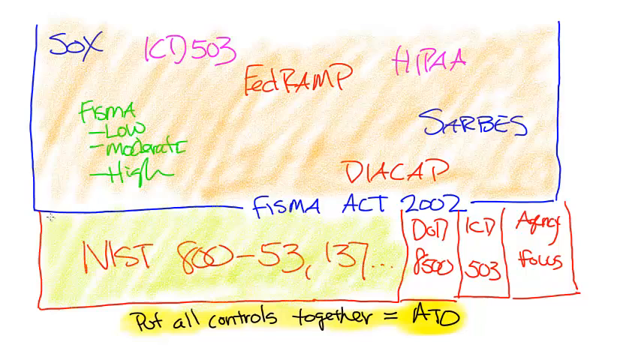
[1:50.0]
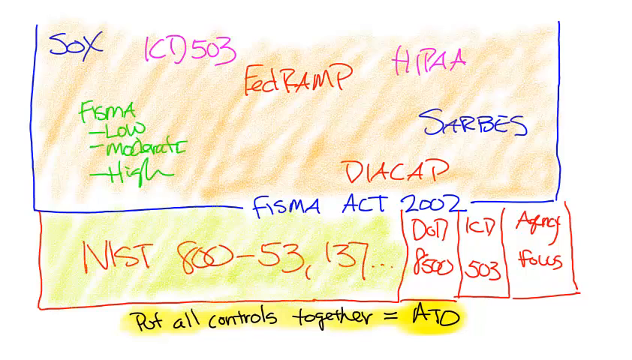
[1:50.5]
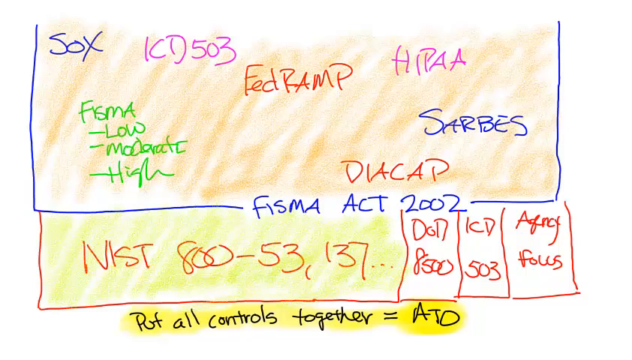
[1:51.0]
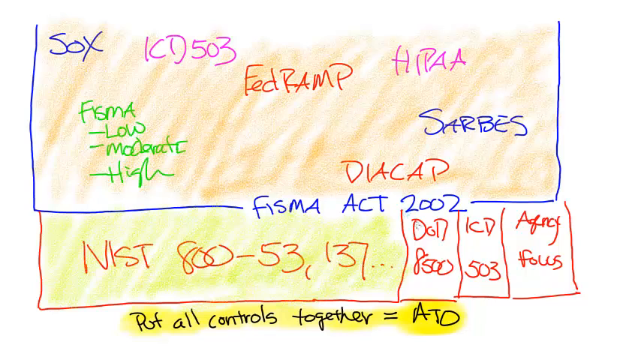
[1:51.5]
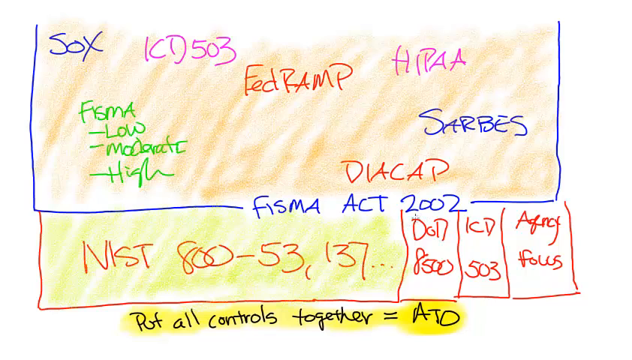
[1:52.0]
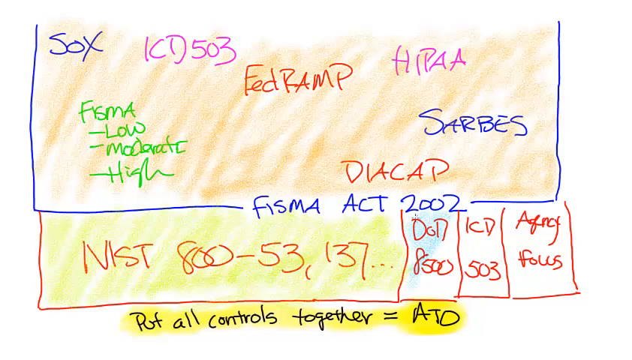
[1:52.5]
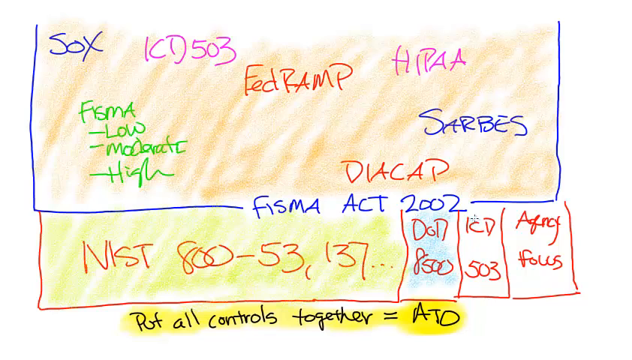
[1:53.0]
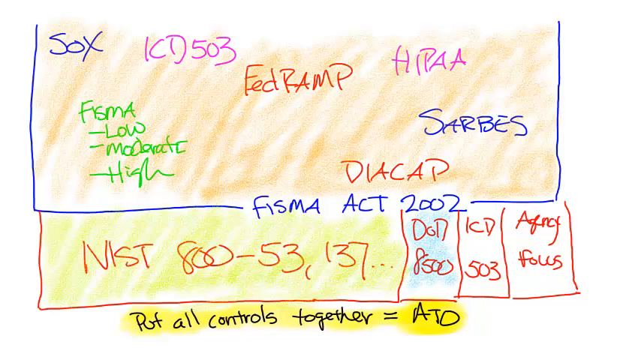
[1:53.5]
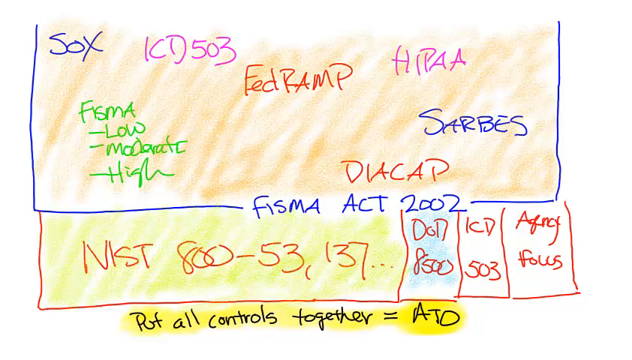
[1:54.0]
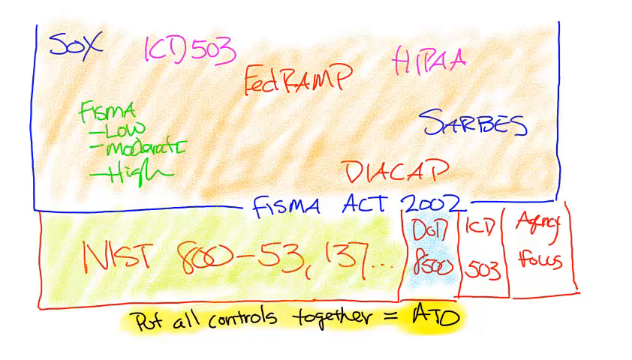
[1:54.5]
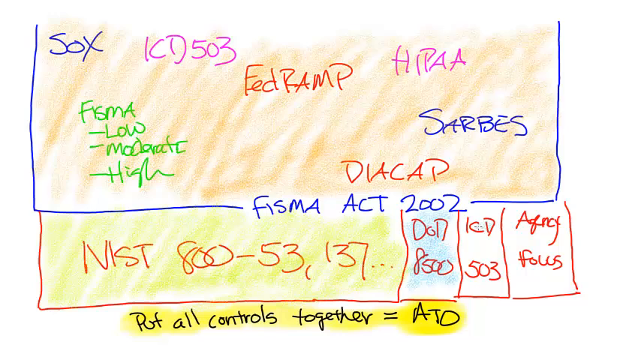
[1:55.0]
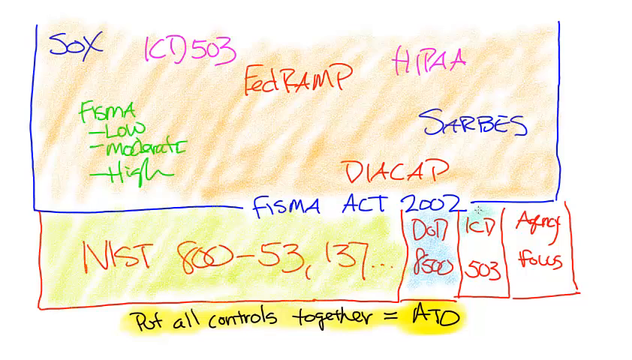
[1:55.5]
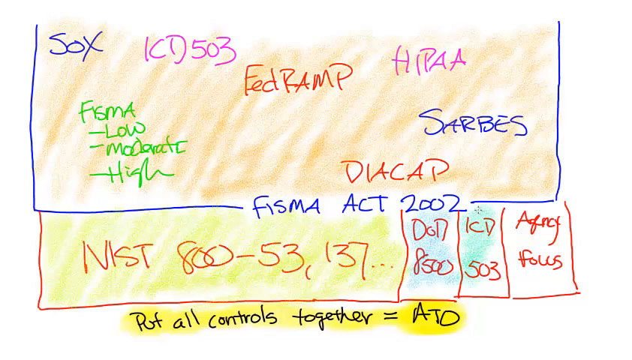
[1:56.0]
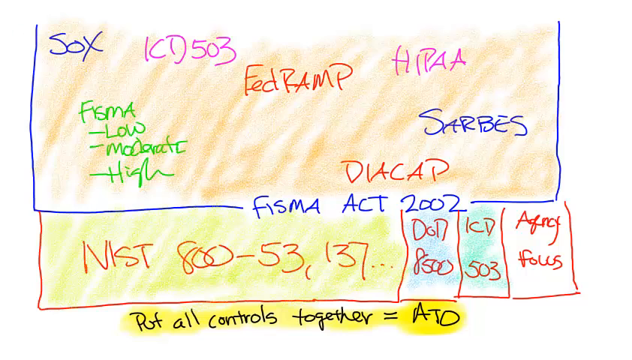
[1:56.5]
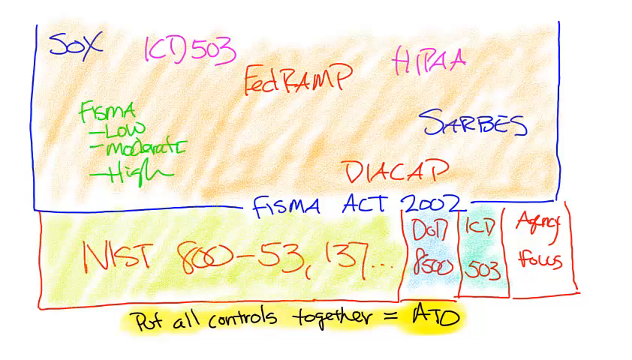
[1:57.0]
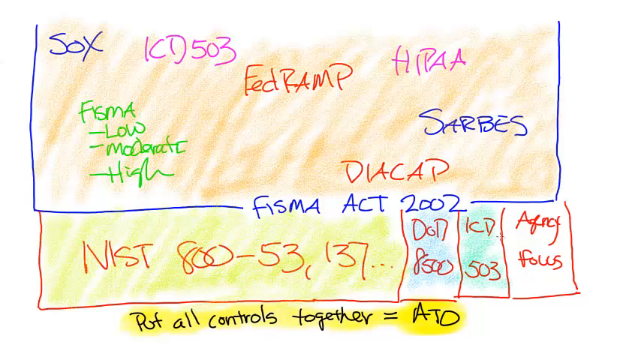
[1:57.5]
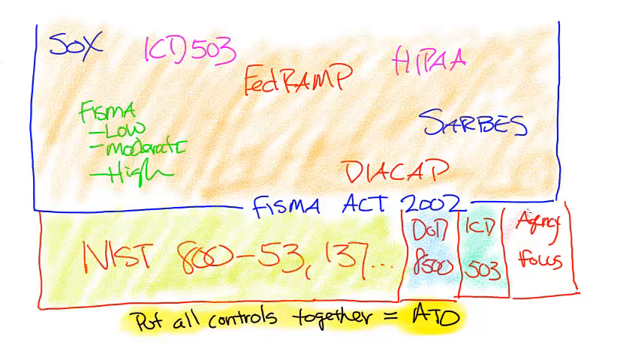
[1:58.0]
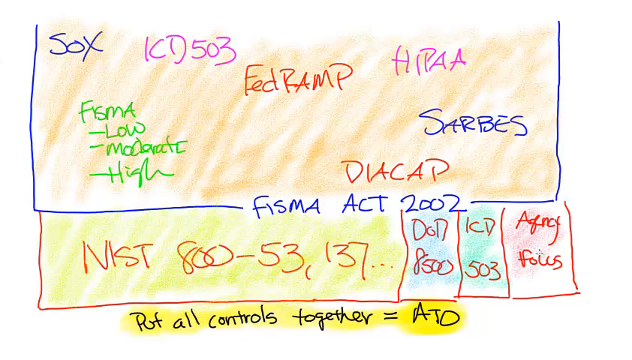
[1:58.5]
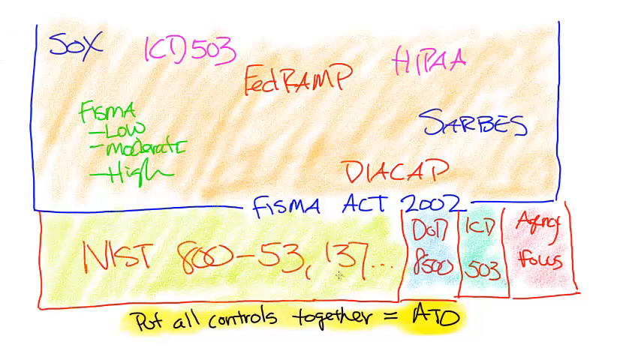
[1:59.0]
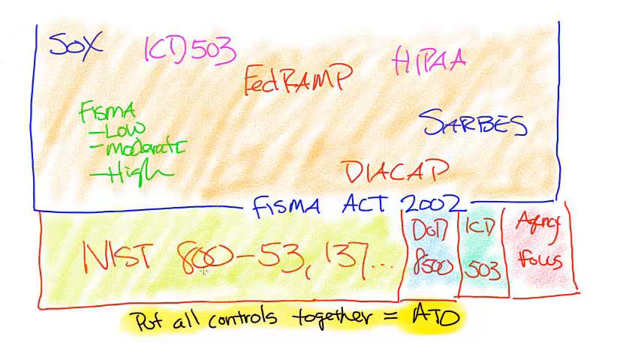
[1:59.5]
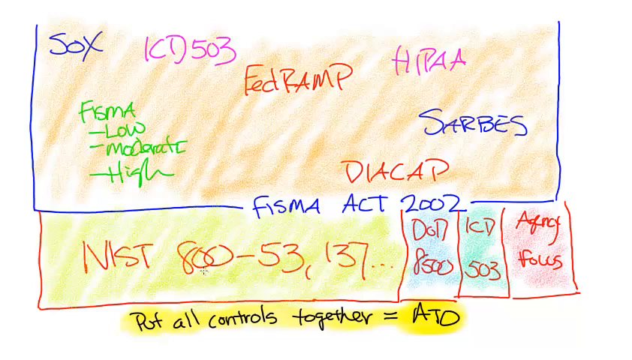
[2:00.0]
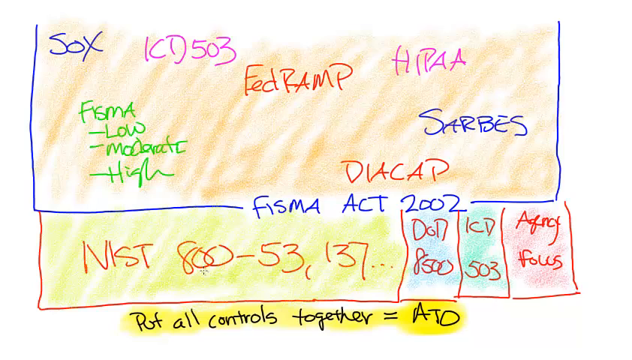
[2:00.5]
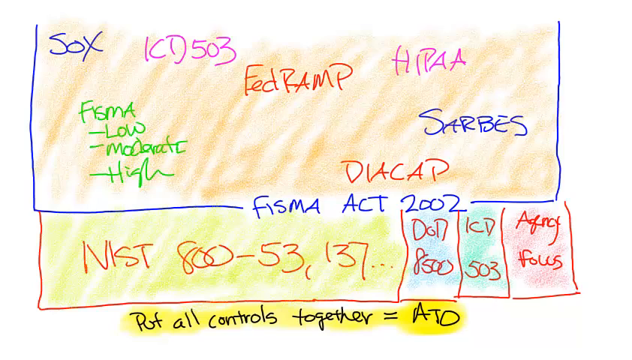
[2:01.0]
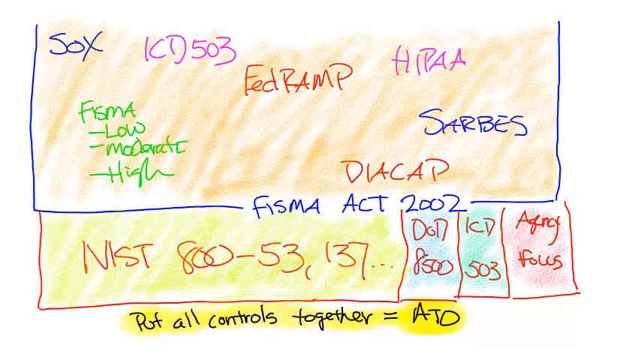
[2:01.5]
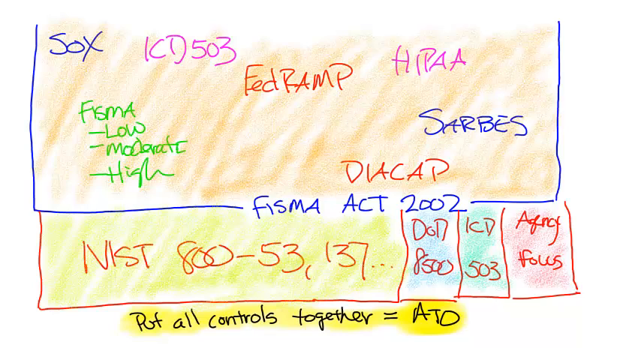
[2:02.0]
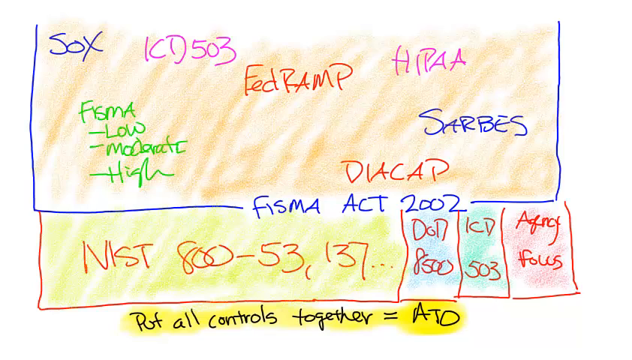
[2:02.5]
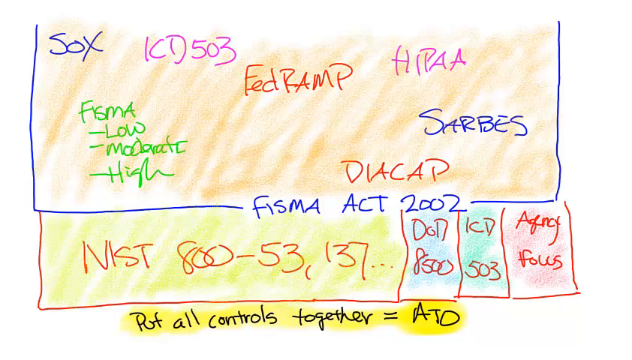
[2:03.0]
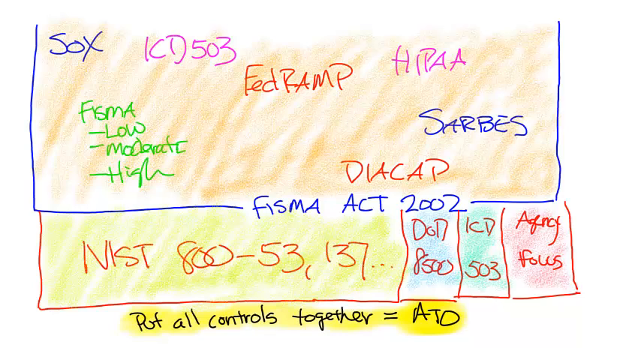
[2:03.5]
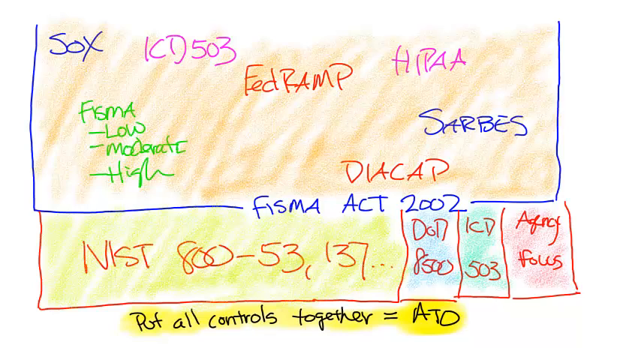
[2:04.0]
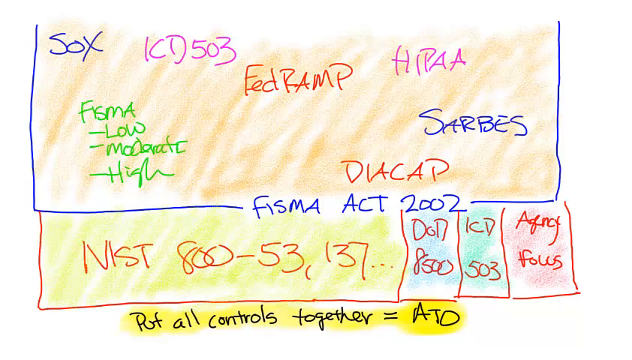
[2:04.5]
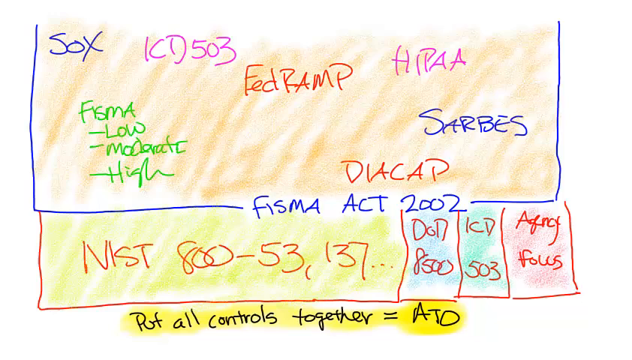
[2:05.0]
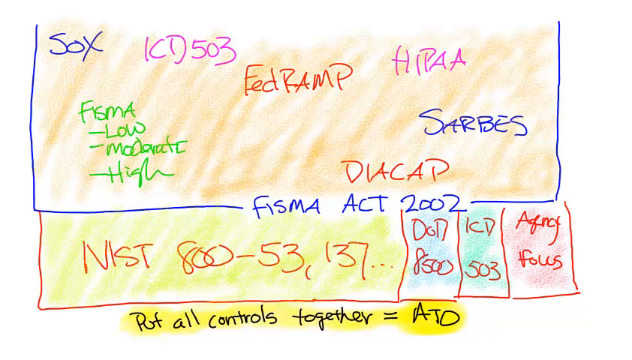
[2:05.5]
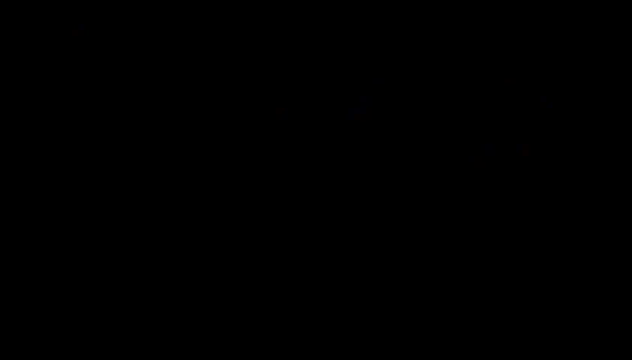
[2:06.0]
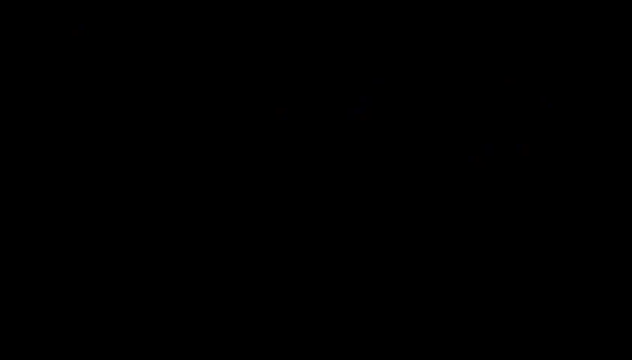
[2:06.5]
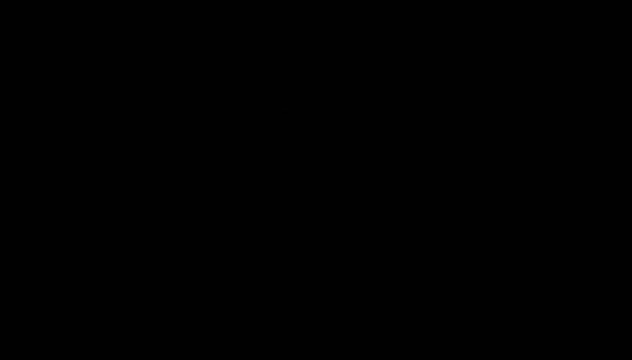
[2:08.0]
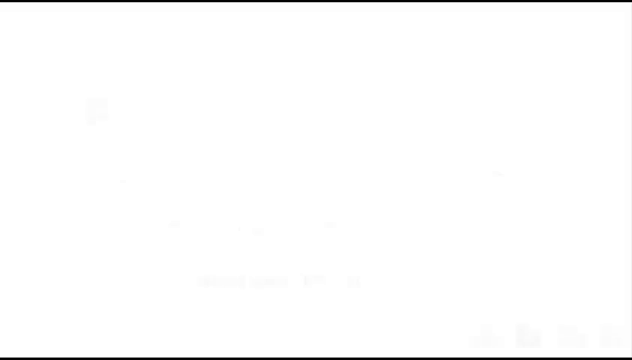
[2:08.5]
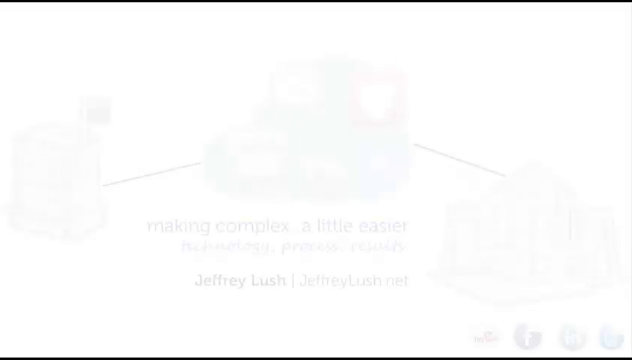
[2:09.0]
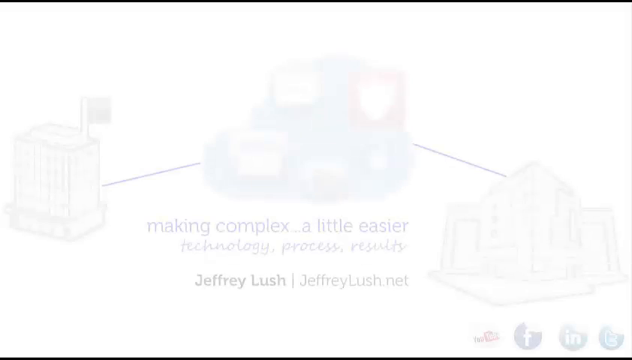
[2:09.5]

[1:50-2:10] The pointer is over the first small red rectangular section and colors it in very quickly from top to bottom in a crayon-like coloring style. It moves to the left of the screen and then over the second rectangular section, this time with a greenish color, again coloring it quickly from top to bottom. It moves to the left of the screen again and comes back to the third box, now with a reddish color, coloring it quickly from top to bottom as well. The pointer moves across the screen a few times, and the screen turns black. An image then gradually fades in: first the screen is white, then some pictures slowly become visible, though they are still blurry.